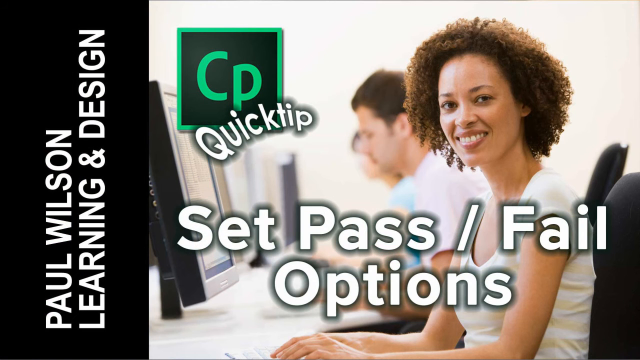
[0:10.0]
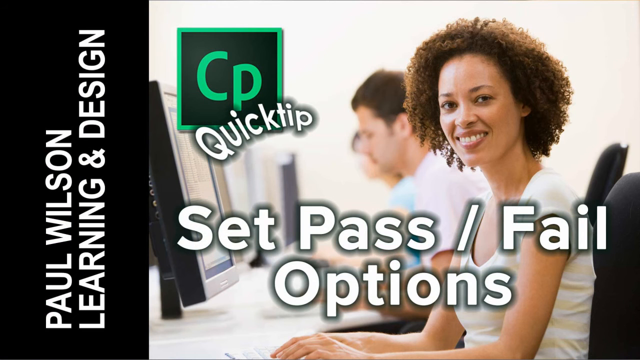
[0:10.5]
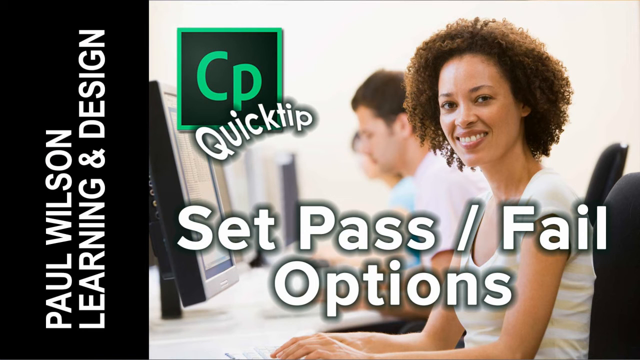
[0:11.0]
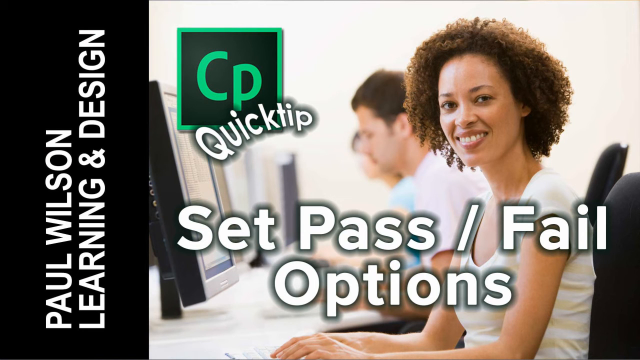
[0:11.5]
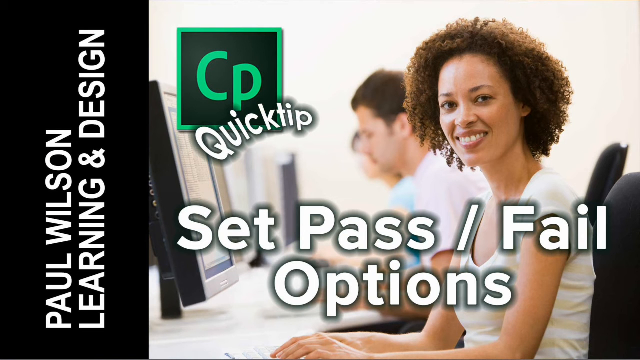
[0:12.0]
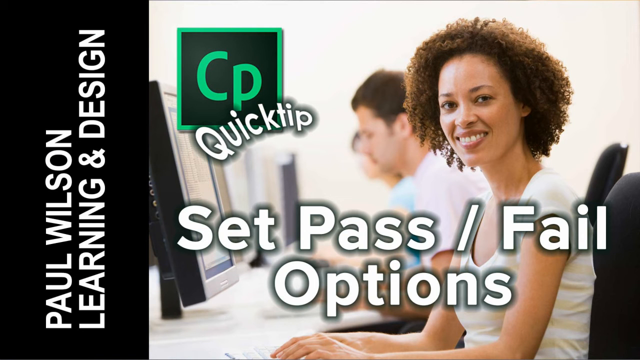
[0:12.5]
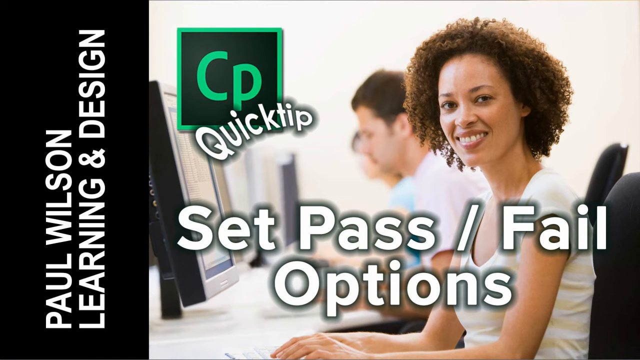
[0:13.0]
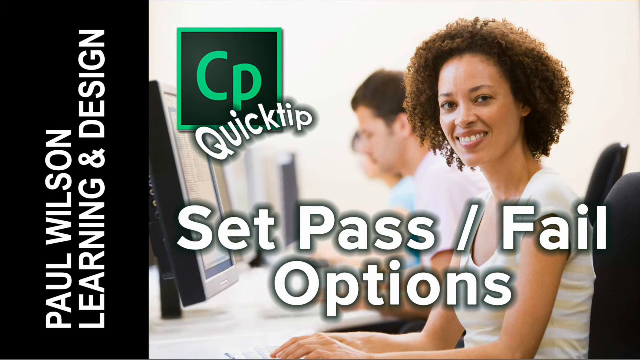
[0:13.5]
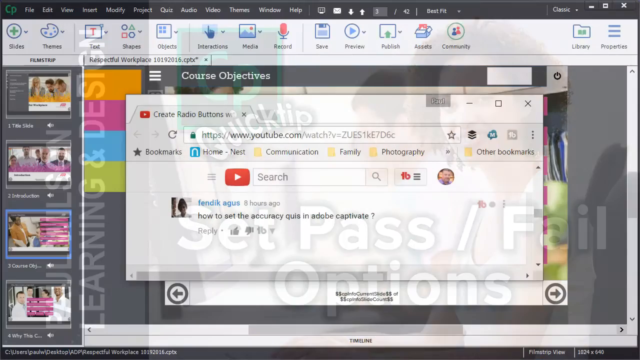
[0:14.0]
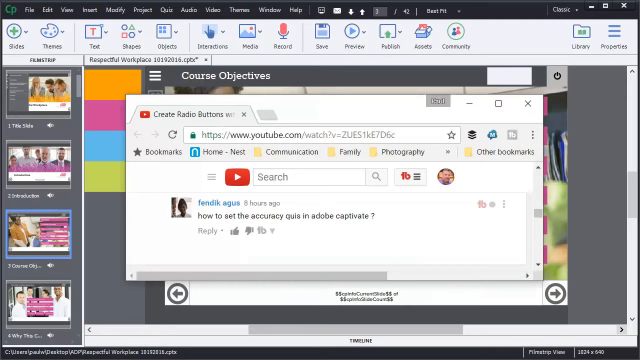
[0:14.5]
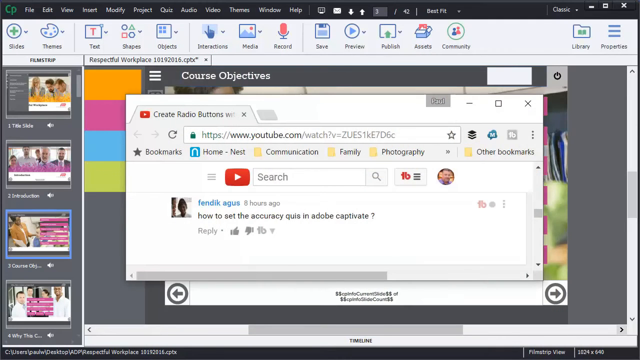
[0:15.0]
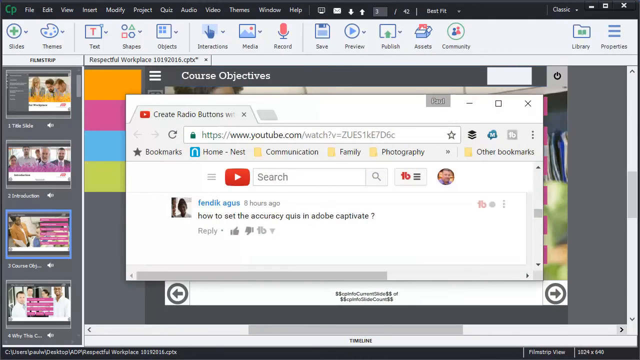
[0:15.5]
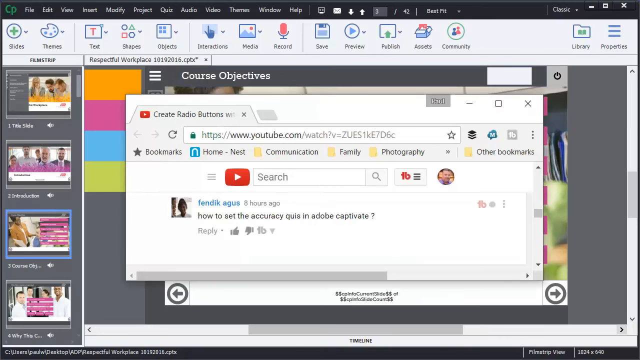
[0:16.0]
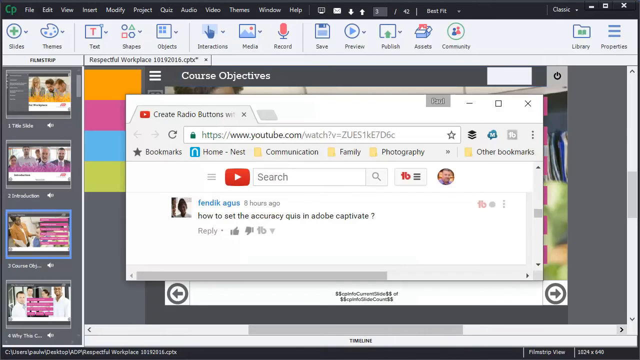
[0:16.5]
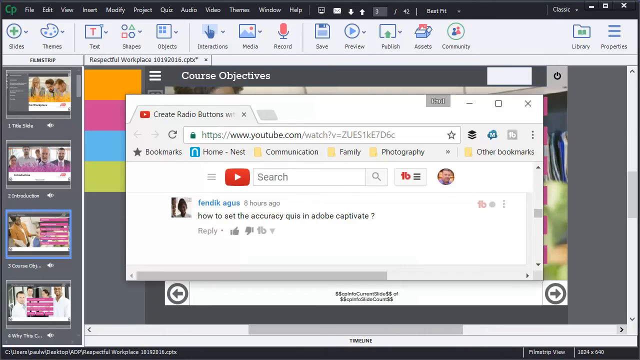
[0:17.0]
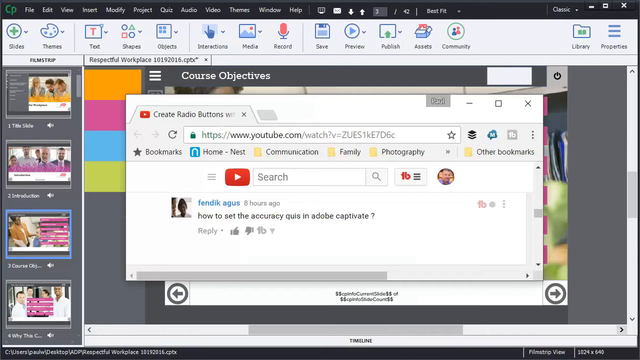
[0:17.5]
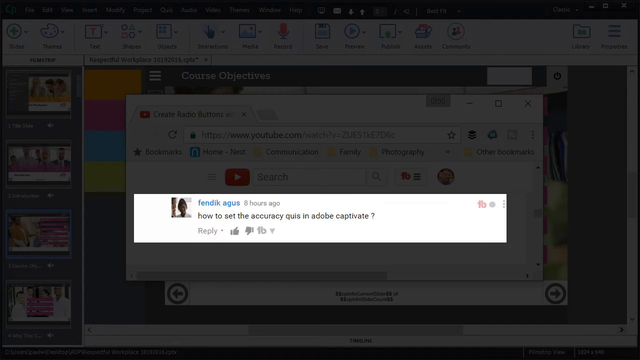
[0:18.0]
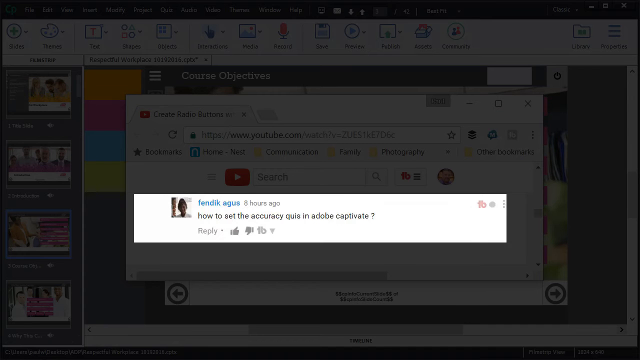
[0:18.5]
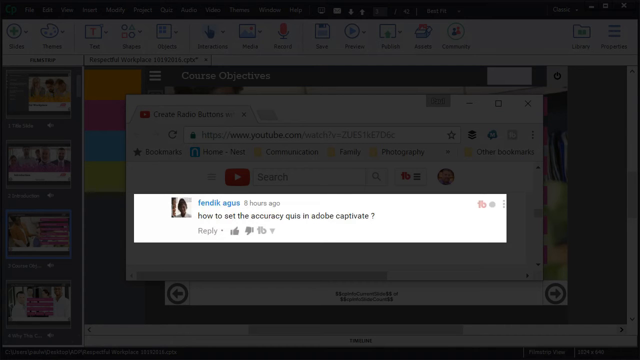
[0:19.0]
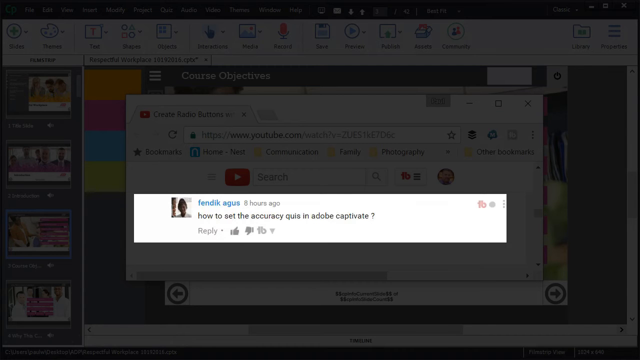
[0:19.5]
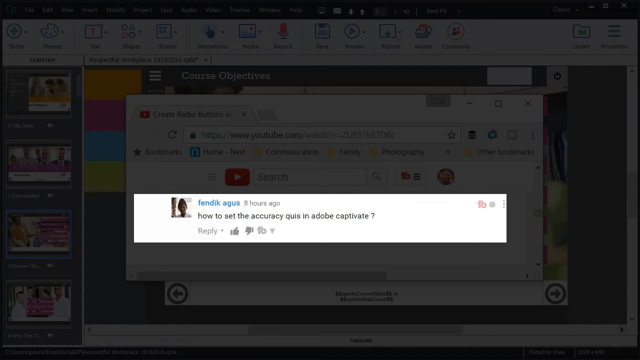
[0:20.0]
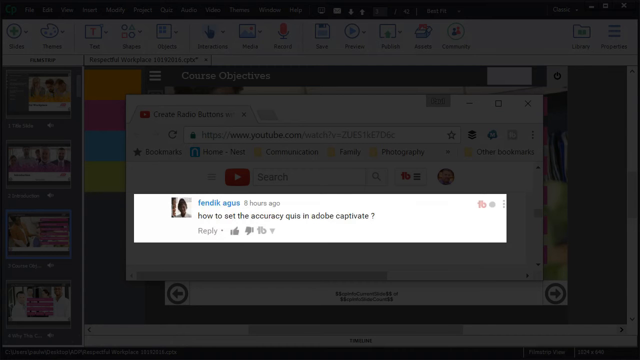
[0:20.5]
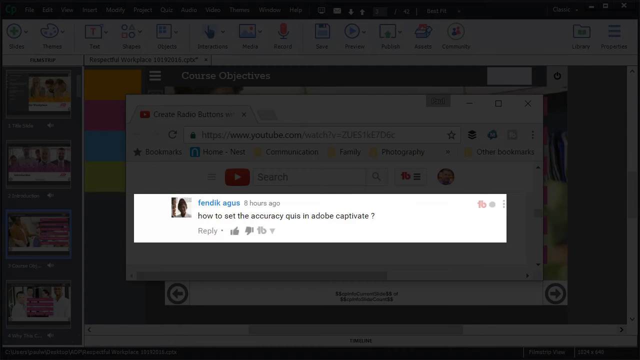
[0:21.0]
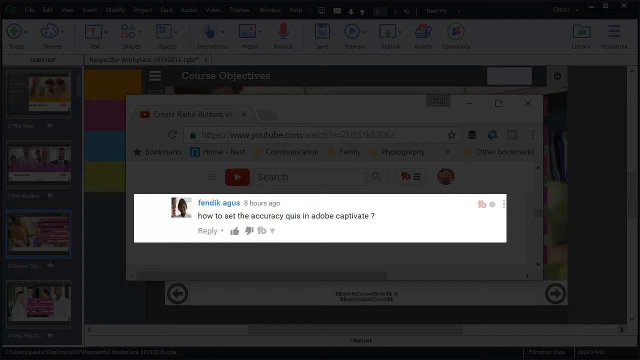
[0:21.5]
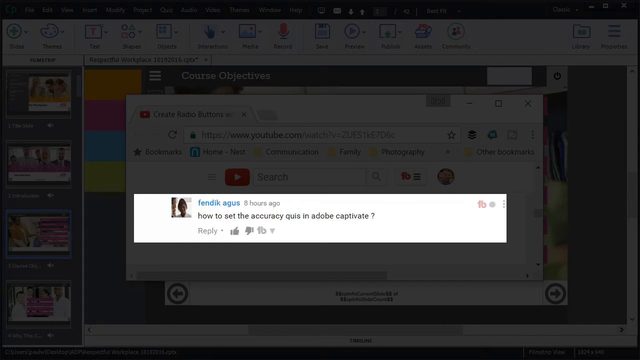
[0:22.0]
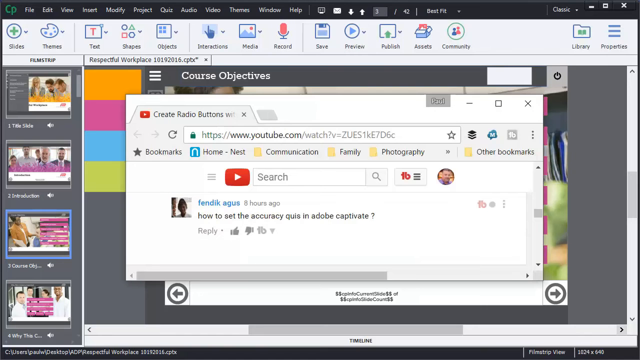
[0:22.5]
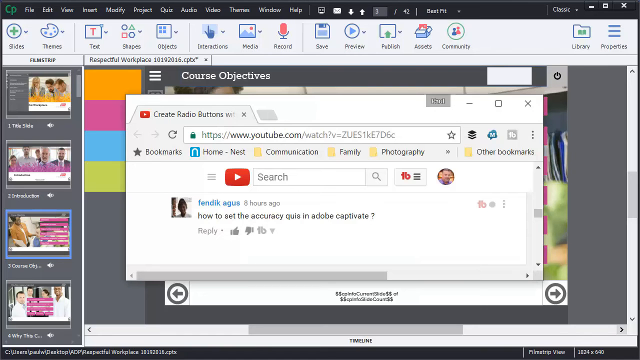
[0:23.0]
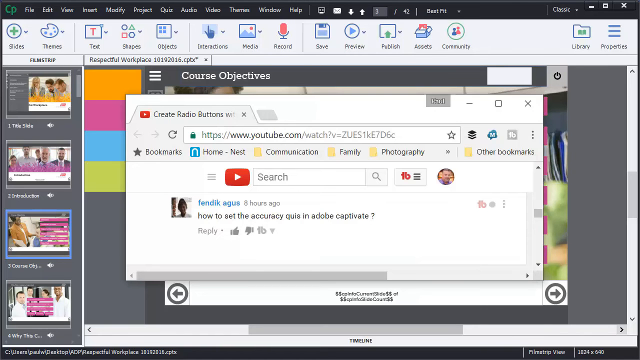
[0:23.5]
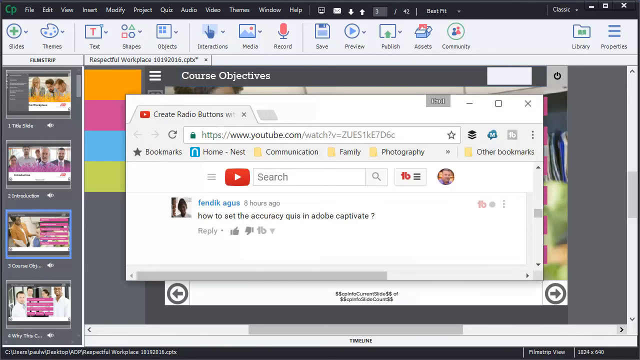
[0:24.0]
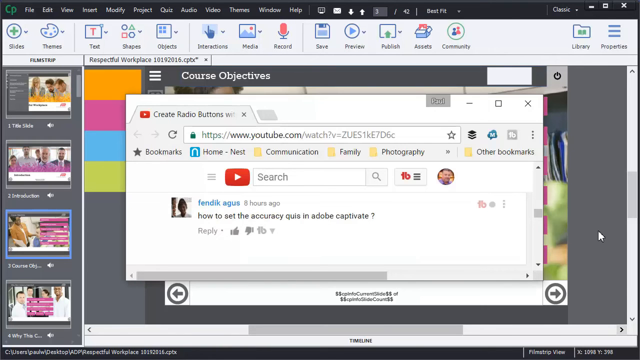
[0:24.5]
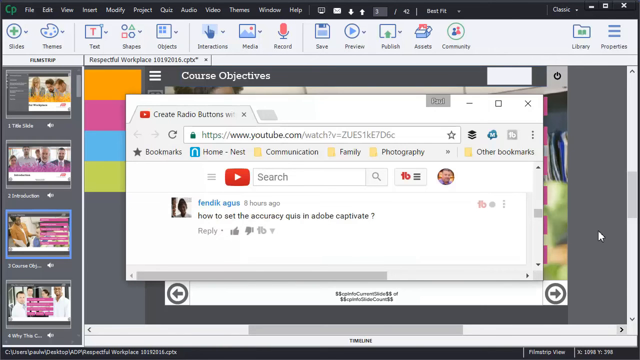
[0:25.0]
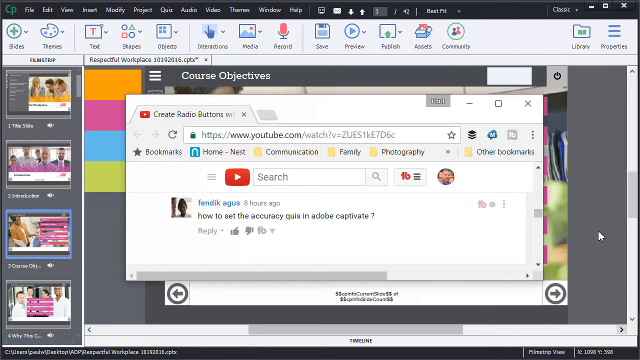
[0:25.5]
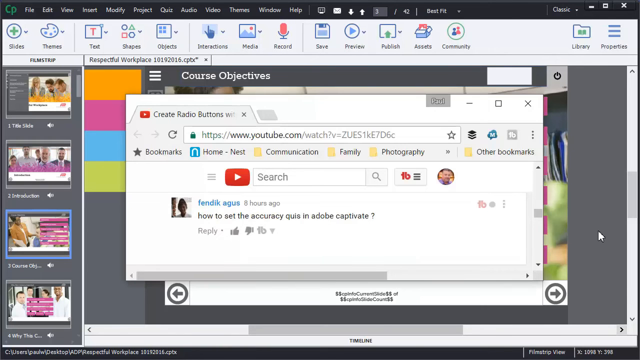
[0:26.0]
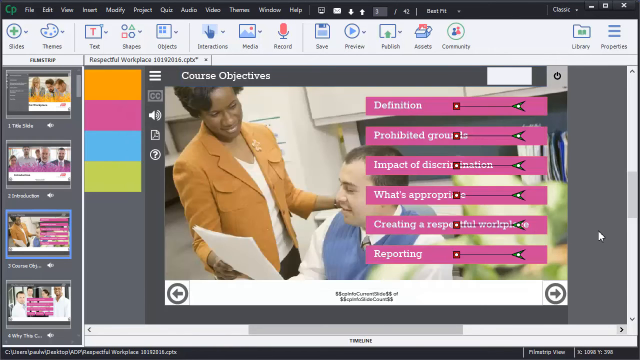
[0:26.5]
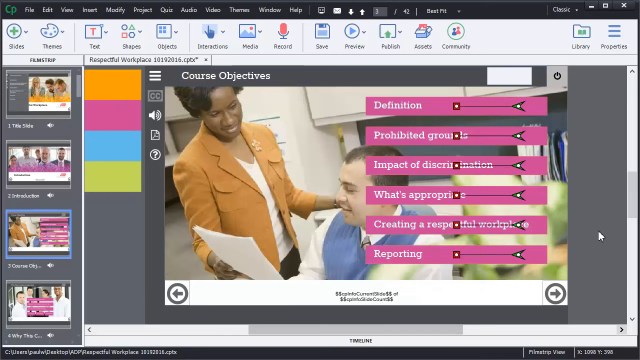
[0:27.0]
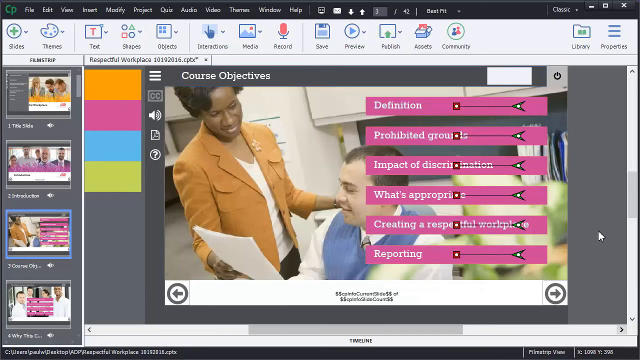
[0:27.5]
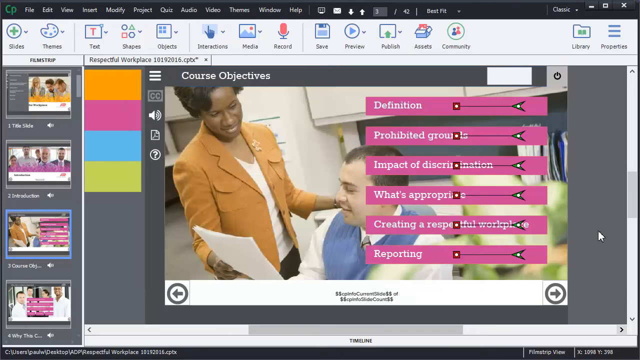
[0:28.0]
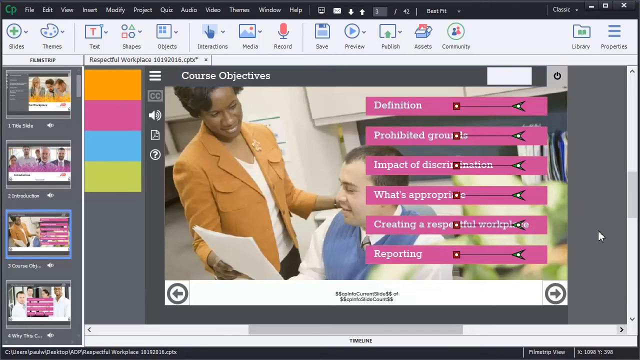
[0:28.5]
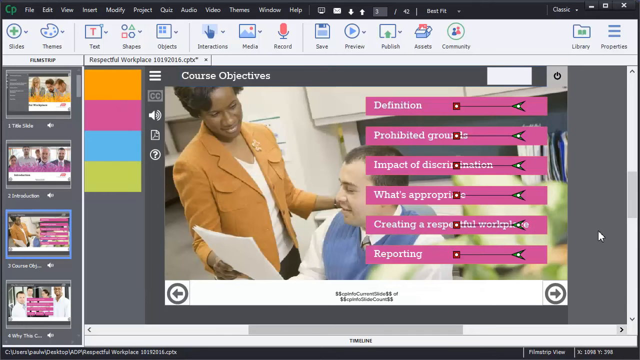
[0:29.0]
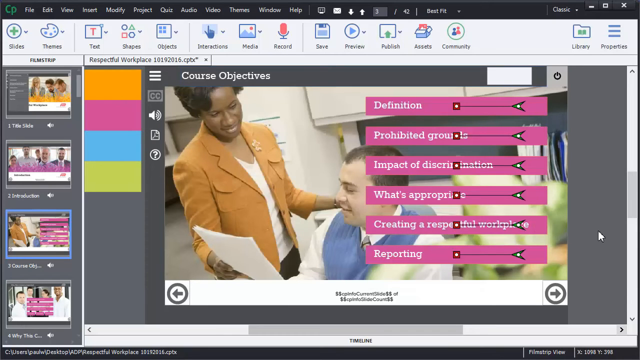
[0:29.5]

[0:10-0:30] The slide reading "tip set pass/fail options" is shown, with "Paul Wilson learning and design" on the left side of the caption, which shows a person smiling at the viewer while seated. The view then returns to what appears to be the presentation application, with the course objectives slide as the backdrop and a pop-up window: a browser with a YouTube tab open. A single comment is visible, from Fendik Agus eight hours ago, stating "how to set the accuracy quiz in Adobe Captivate?" The comment is highlighted while other parts are grayed out, focusing on the comment text. Then the view goes back to the course objectives slide.